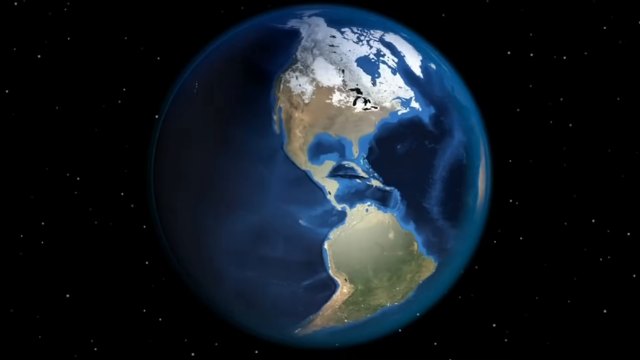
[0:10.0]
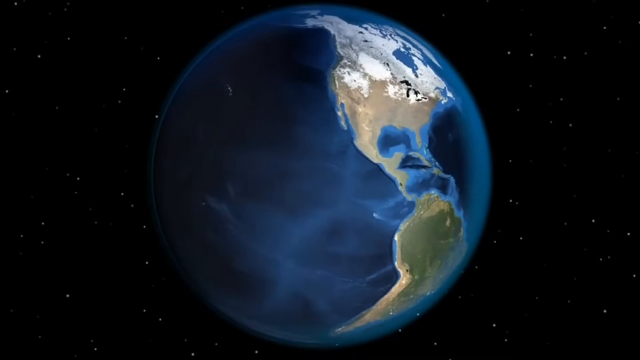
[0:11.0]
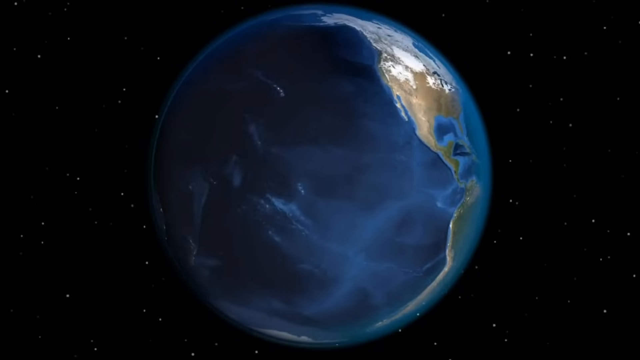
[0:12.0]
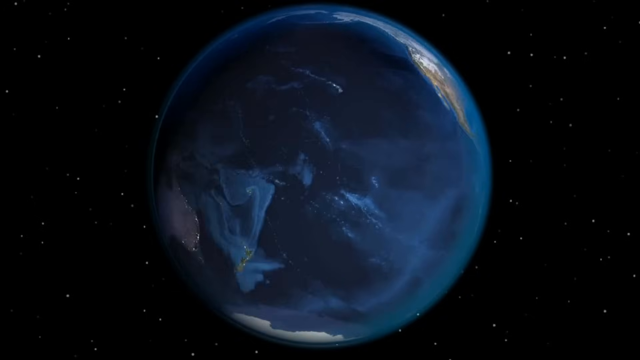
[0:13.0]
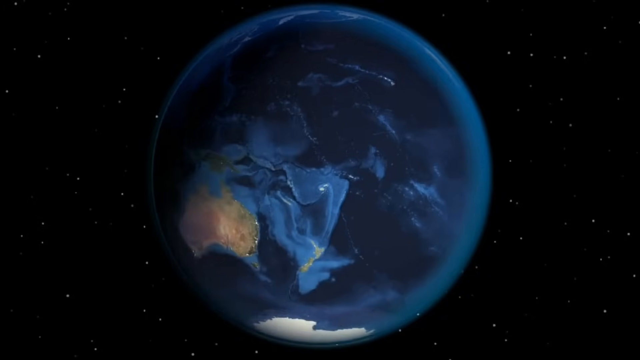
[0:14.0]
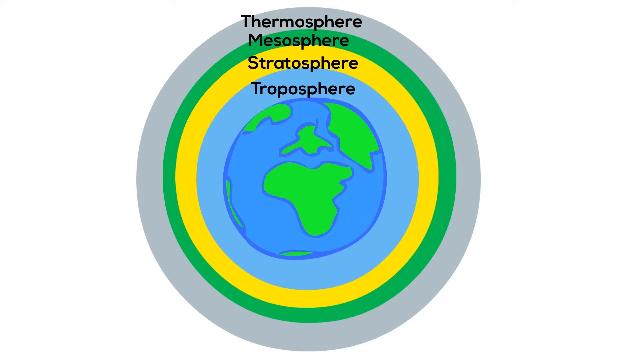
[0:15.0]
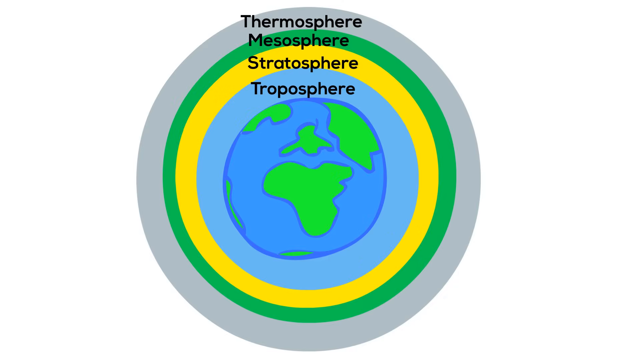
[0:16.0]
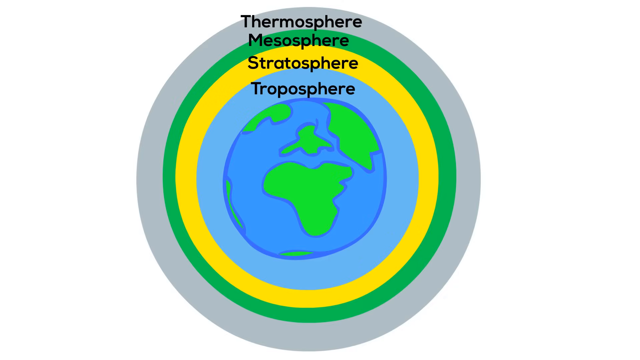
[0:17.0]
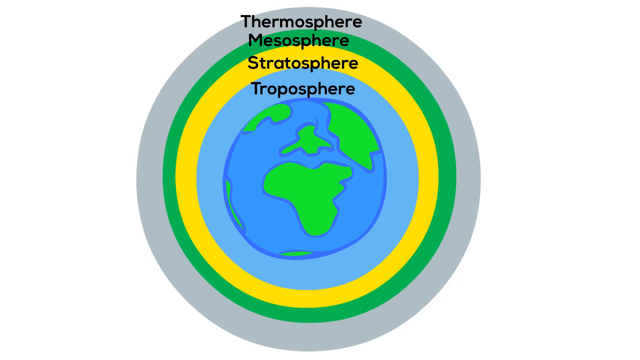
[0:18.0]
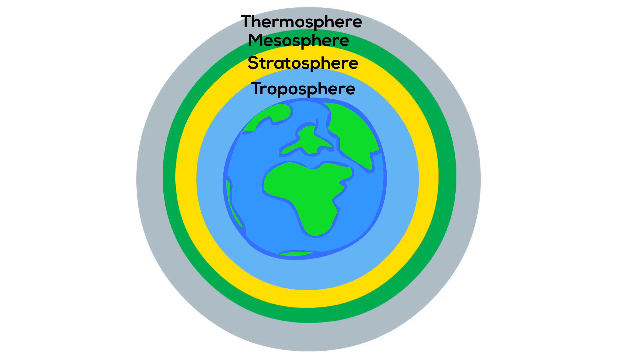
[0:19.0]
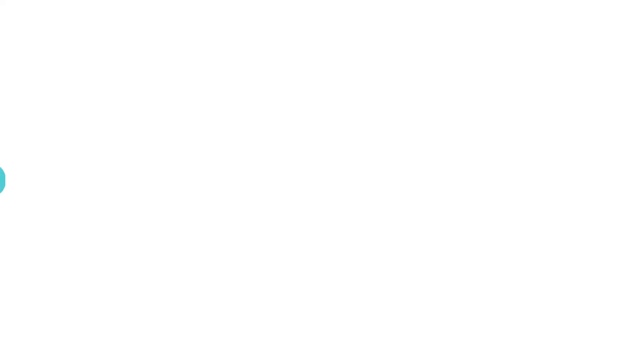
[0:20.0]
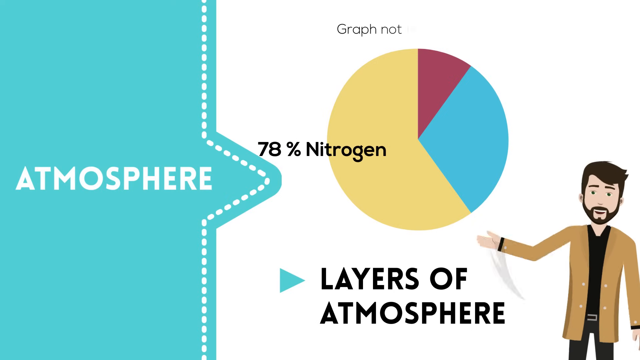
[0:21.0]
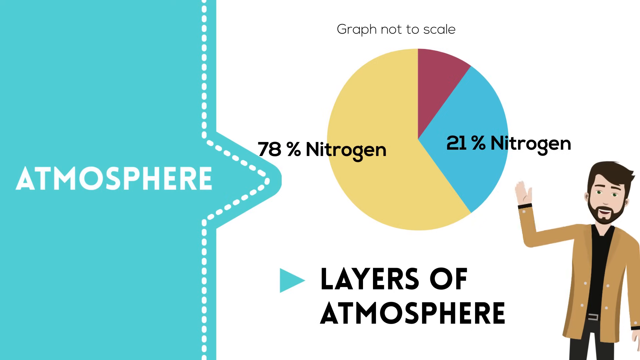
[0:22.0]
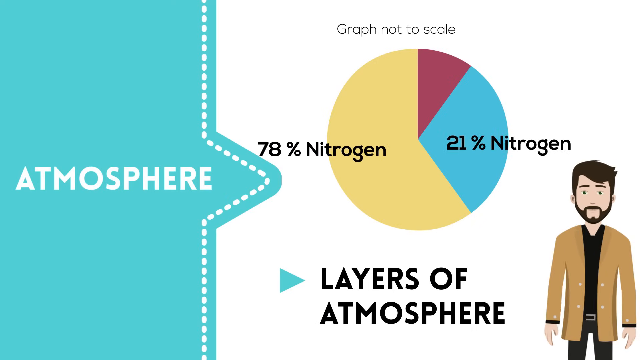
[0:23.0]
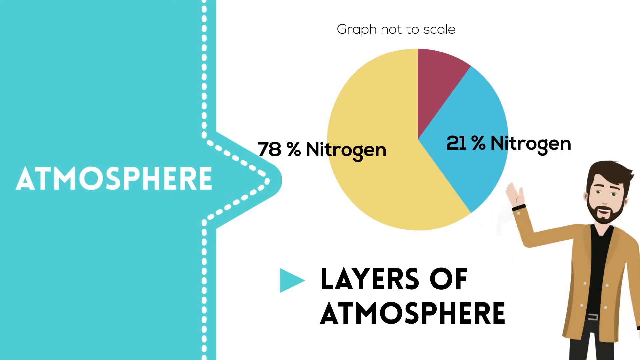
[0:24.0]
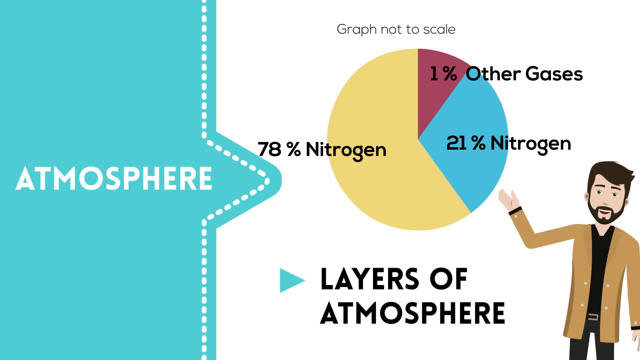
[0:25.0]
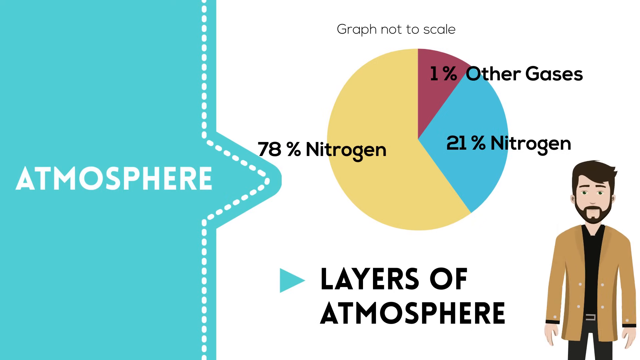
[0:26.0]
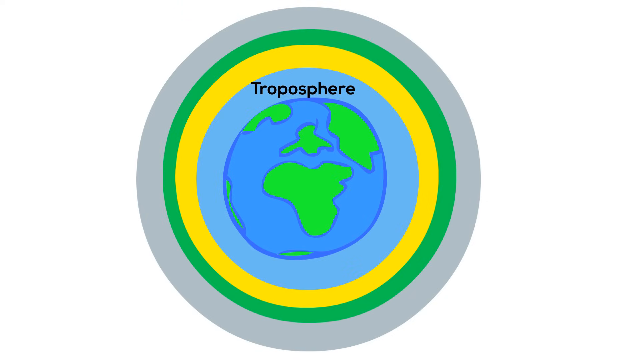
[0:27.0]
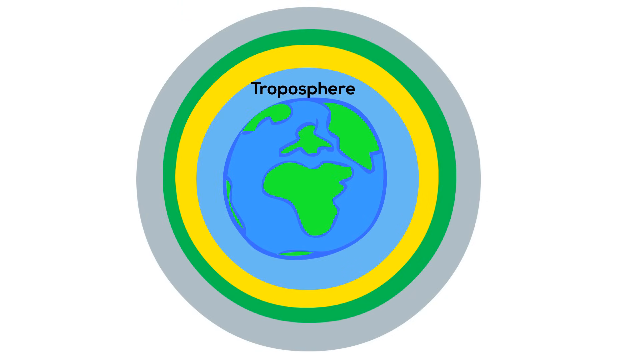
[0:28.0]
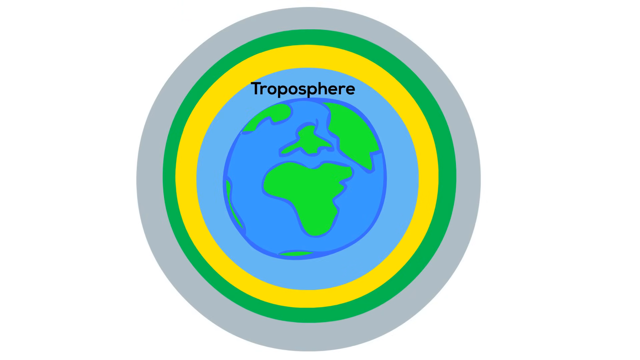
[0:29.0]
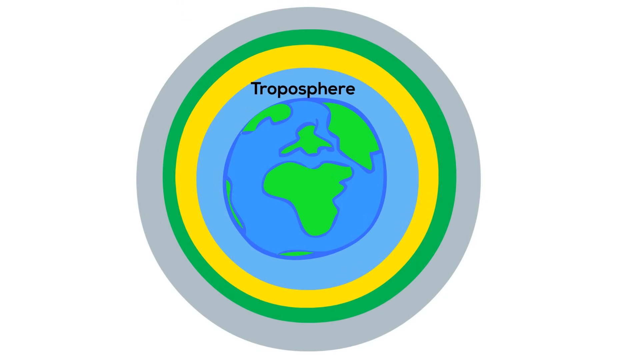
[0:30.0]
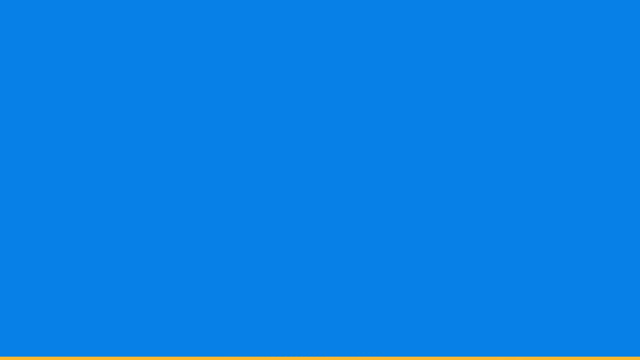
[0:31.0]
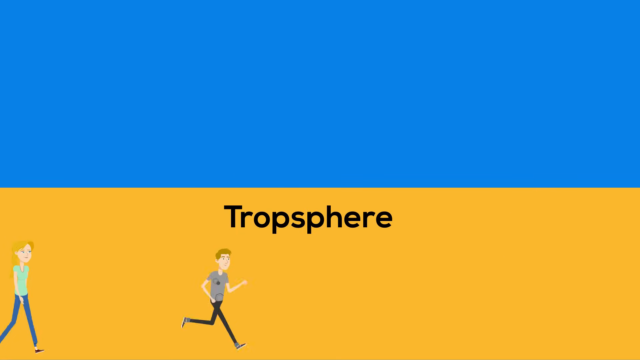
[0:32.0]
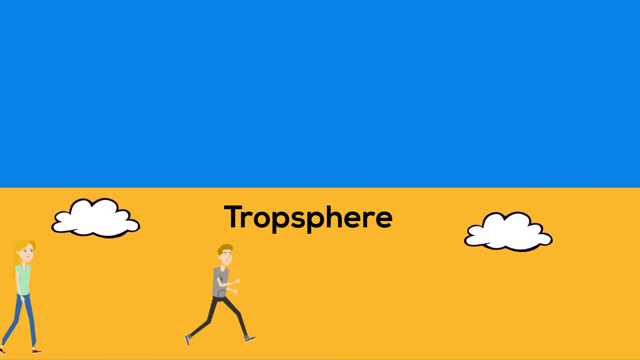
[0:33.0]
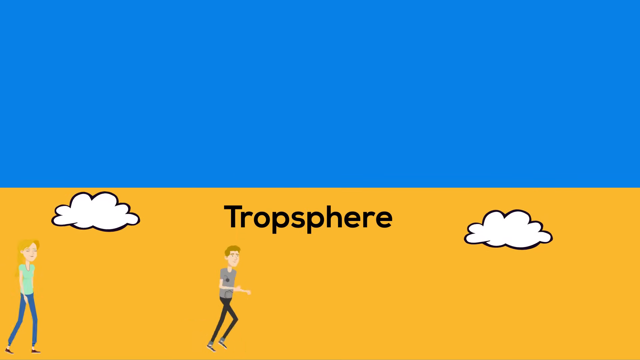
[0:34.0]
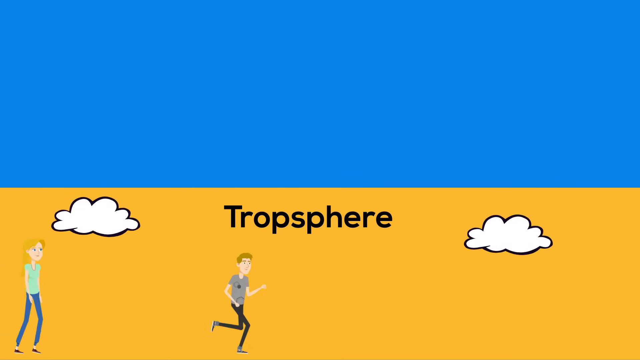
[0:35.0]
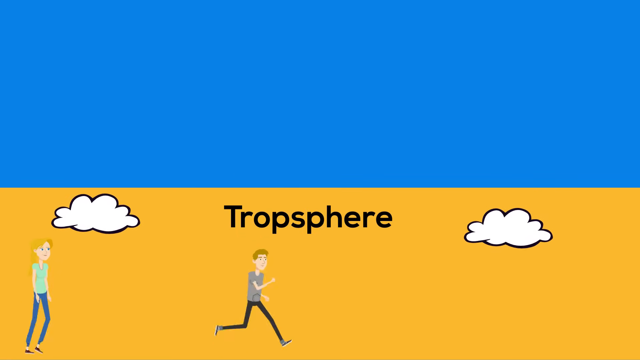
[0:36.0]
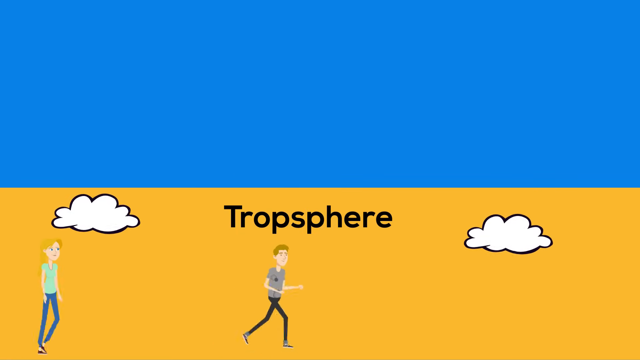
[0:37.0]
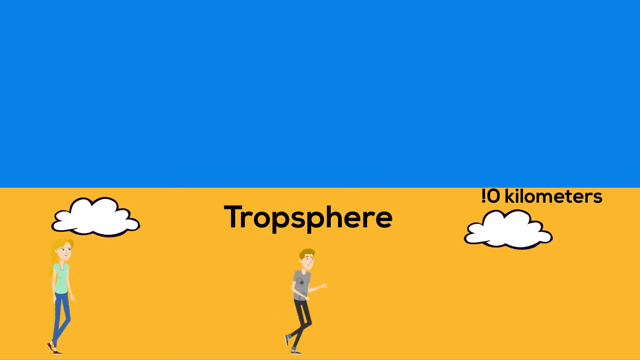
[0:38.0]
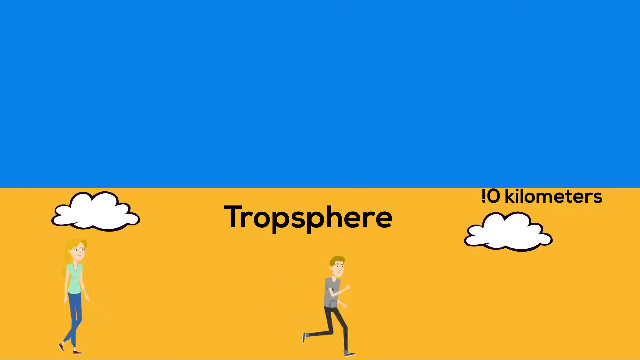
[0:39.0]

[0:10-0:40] The animation continues with the Earth's land masses constantly rotating. A diagram then shows four layers around the Earth, not inside it. The outermost layer appears to be the thermosphere, in gray; the second outermost is the mesosphere, in green; the third is the stratosphere, in yellow; and the one directly around the Earth is the troposphere, in light blue. Next comes a pie graph showing the atmosphere as 21% nitrogen, 78% nitrogen, and 1% other gases, with two segments carrying the same nitrogen label.